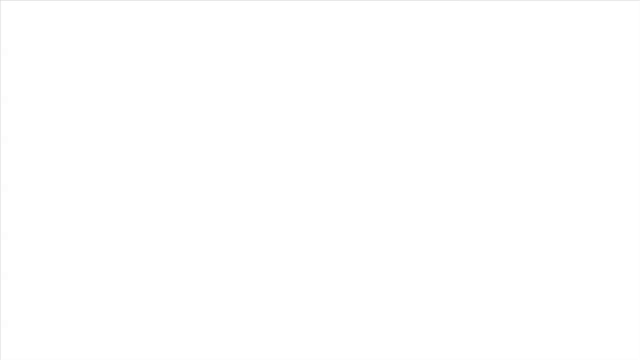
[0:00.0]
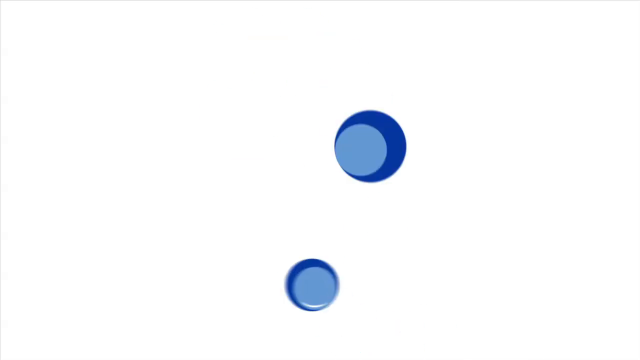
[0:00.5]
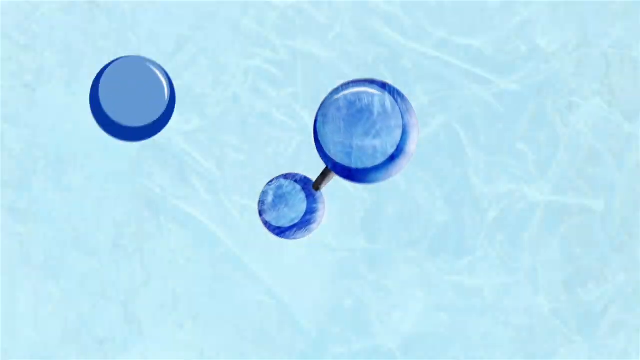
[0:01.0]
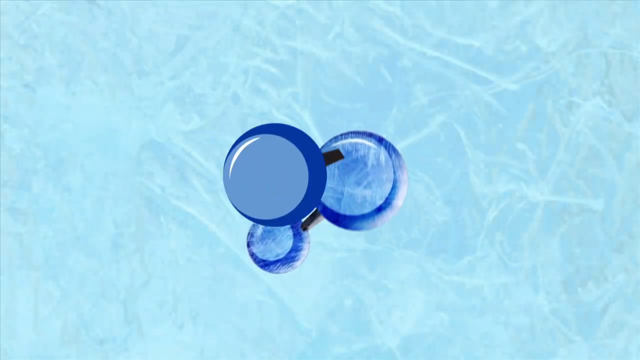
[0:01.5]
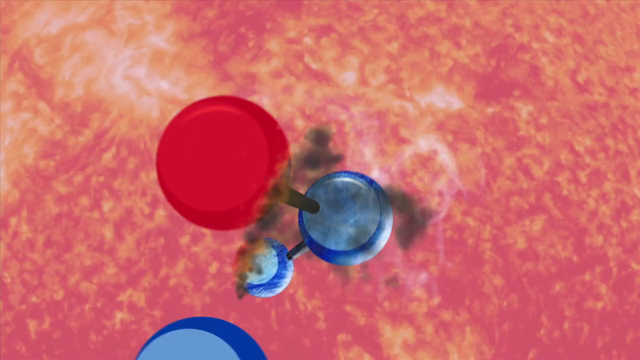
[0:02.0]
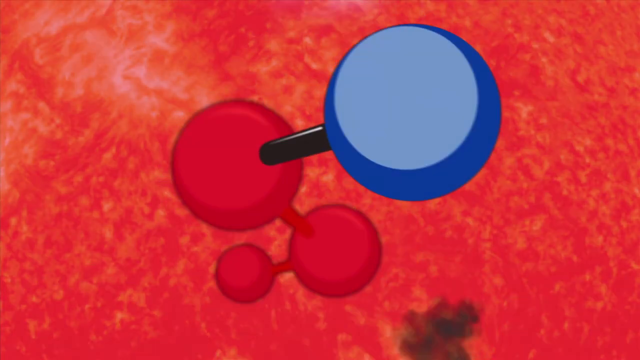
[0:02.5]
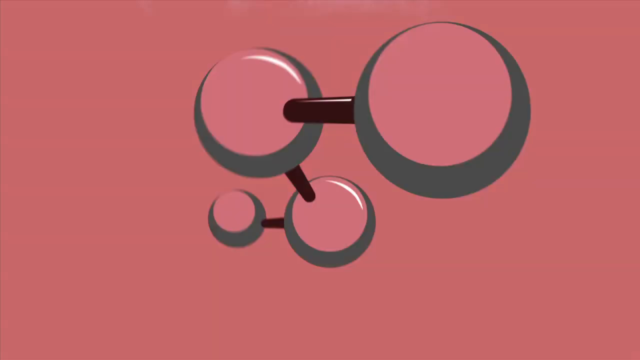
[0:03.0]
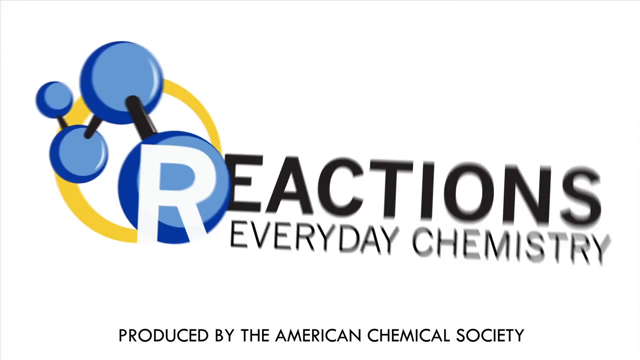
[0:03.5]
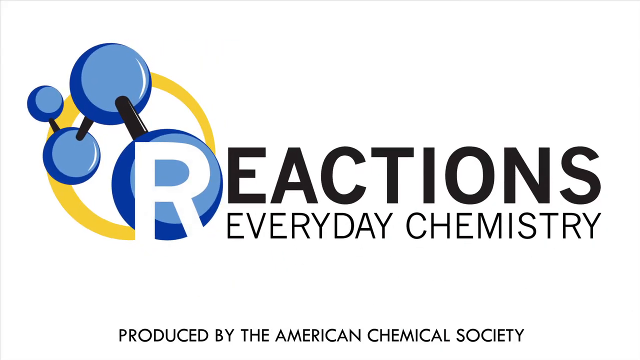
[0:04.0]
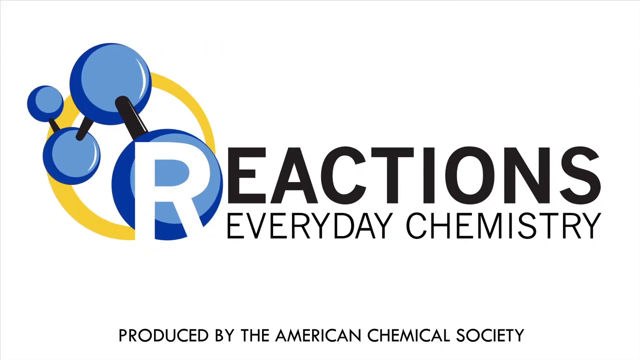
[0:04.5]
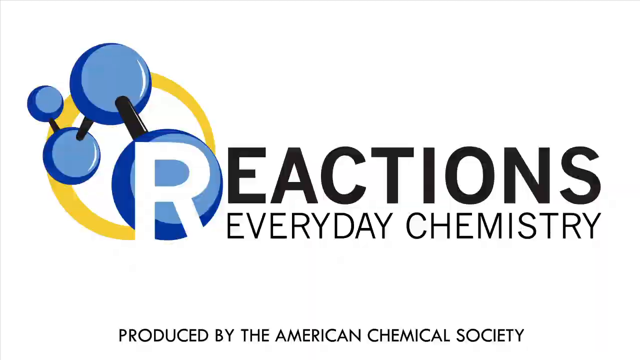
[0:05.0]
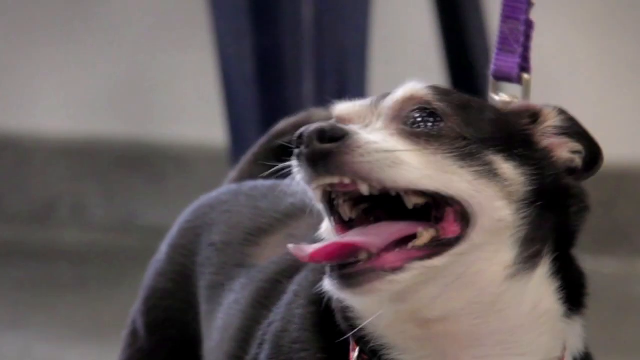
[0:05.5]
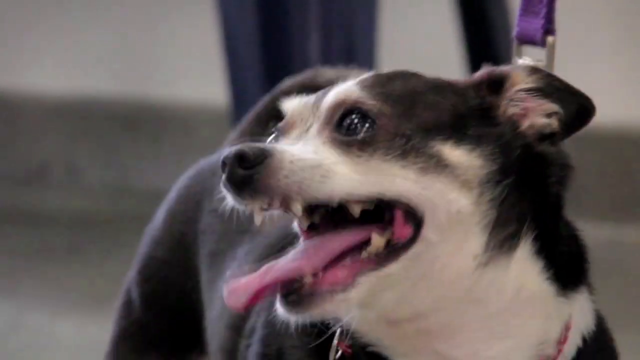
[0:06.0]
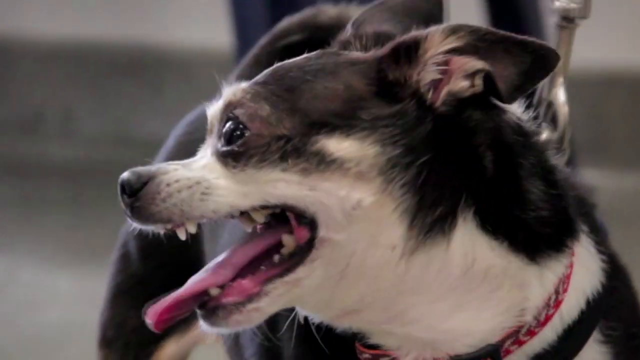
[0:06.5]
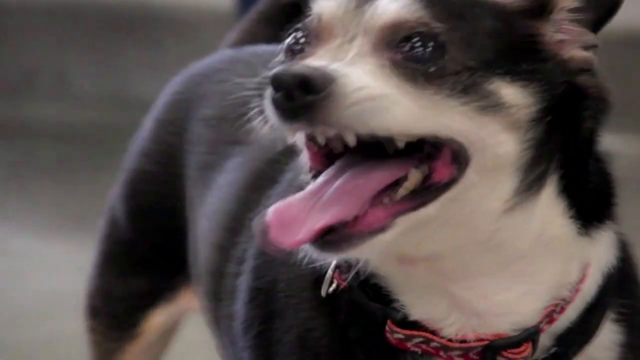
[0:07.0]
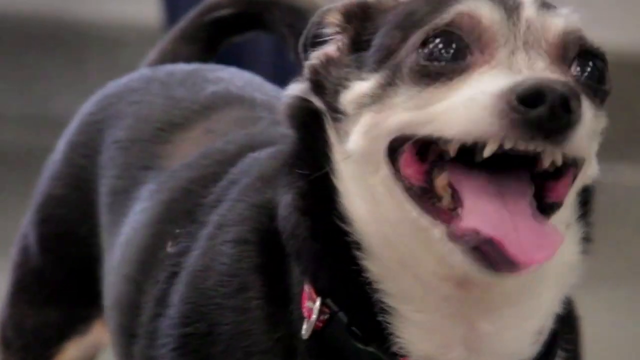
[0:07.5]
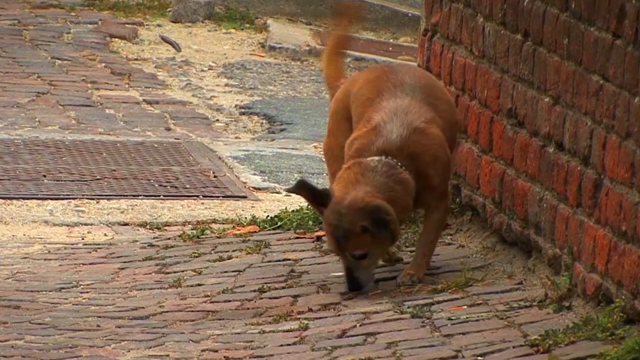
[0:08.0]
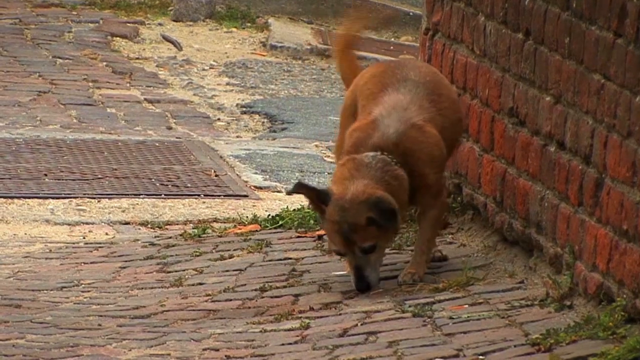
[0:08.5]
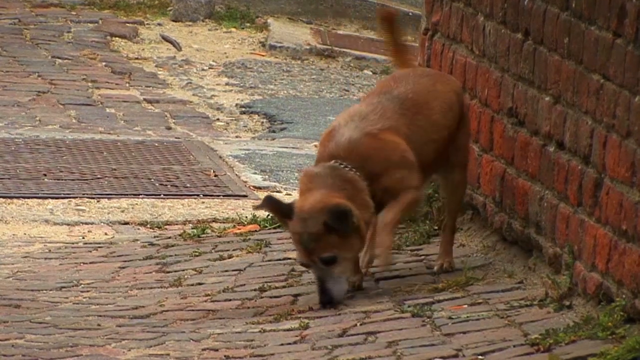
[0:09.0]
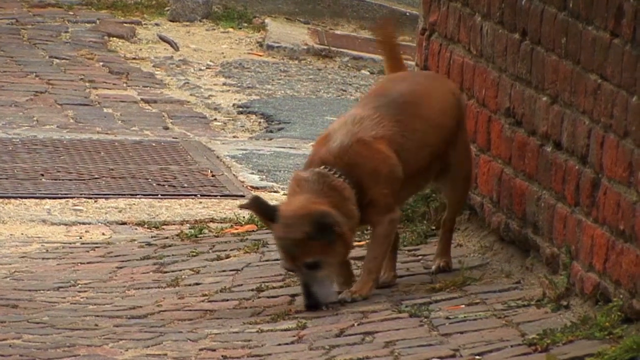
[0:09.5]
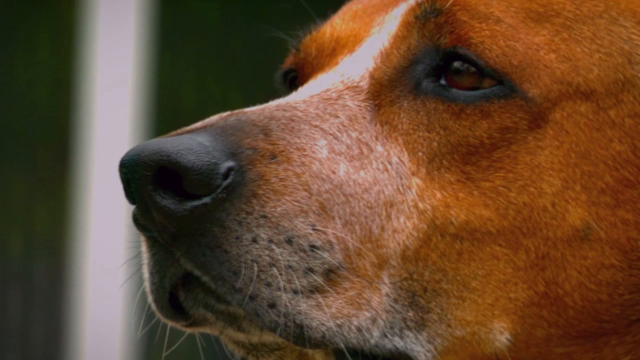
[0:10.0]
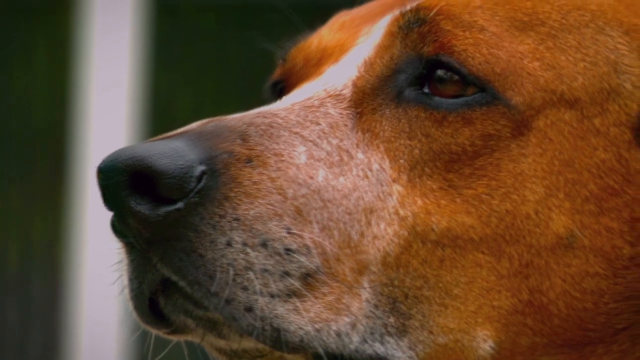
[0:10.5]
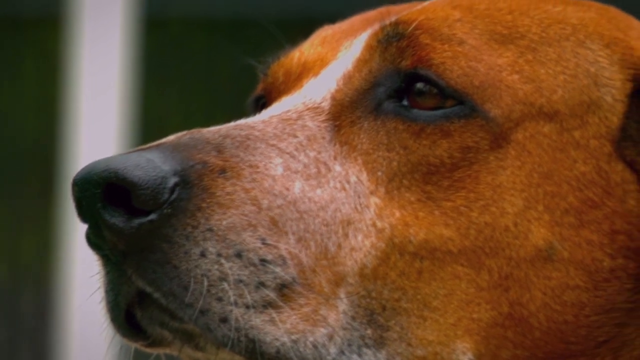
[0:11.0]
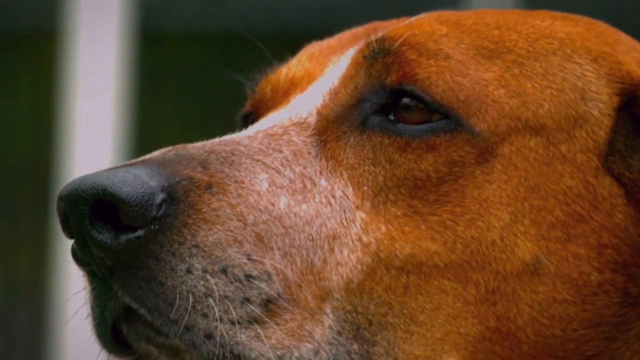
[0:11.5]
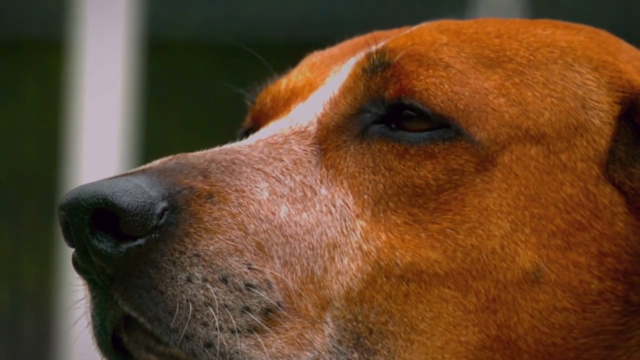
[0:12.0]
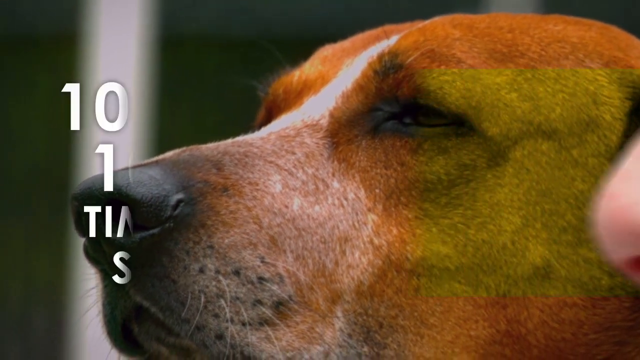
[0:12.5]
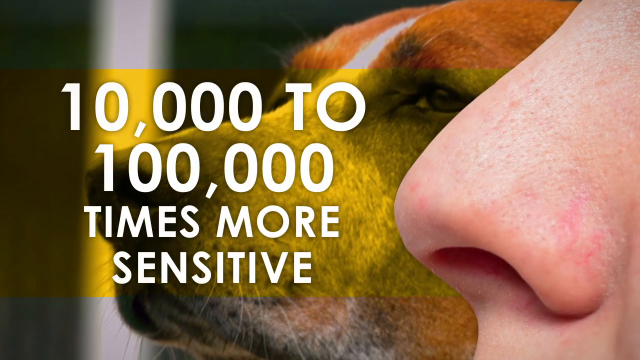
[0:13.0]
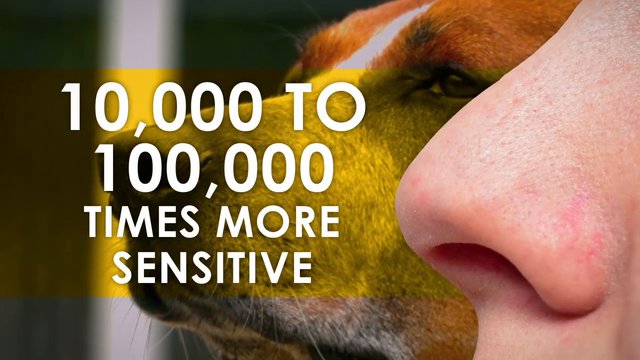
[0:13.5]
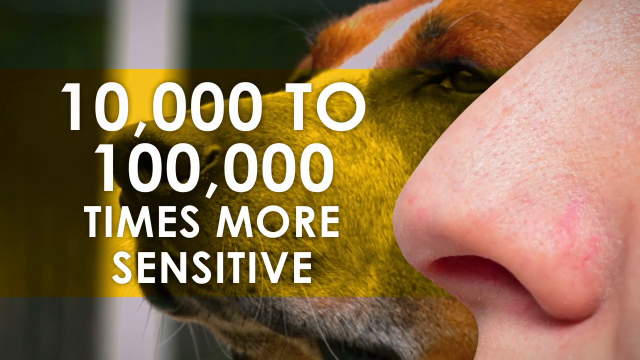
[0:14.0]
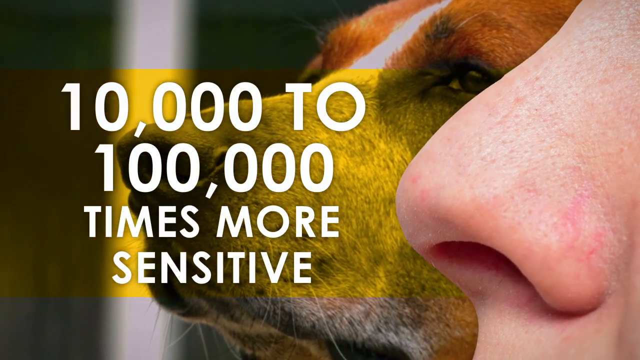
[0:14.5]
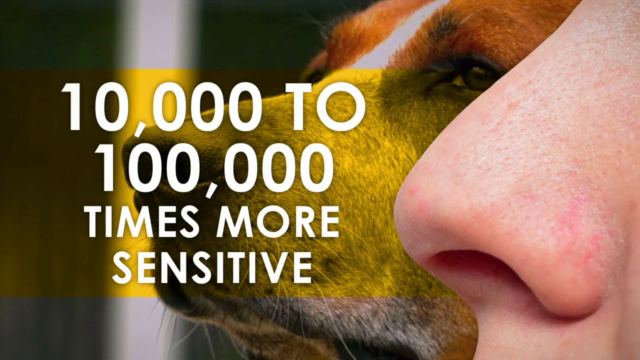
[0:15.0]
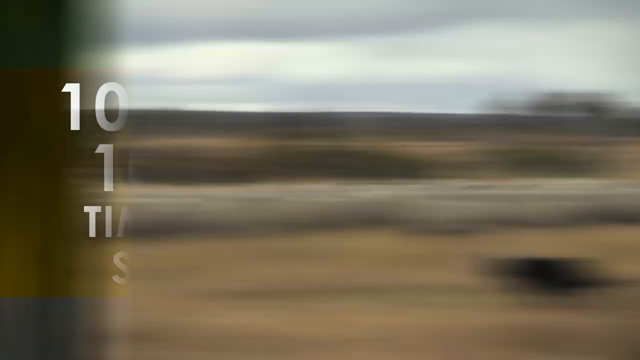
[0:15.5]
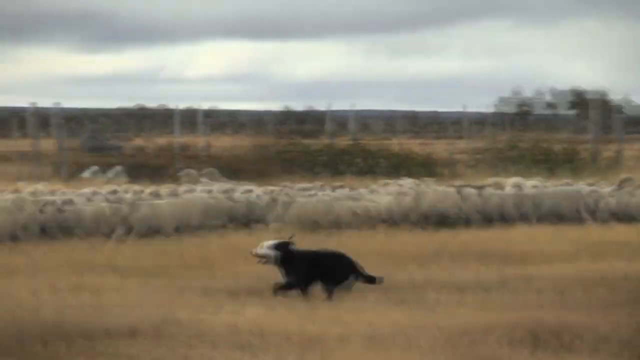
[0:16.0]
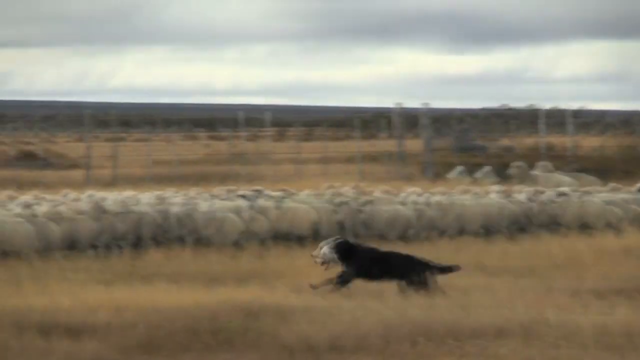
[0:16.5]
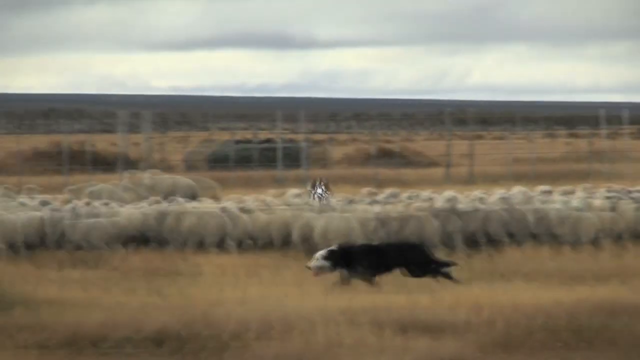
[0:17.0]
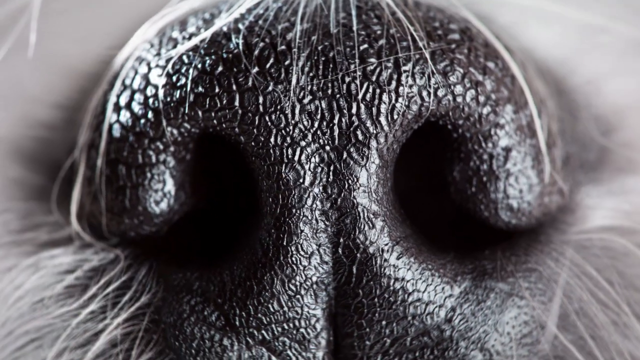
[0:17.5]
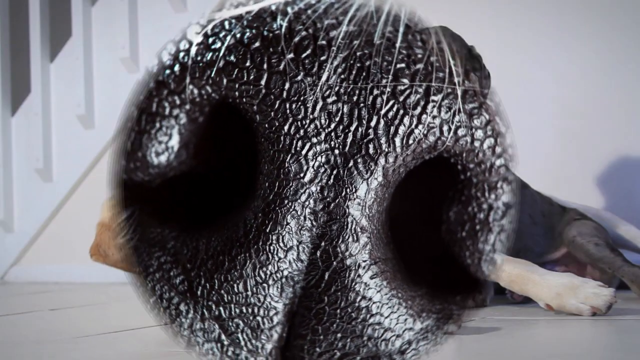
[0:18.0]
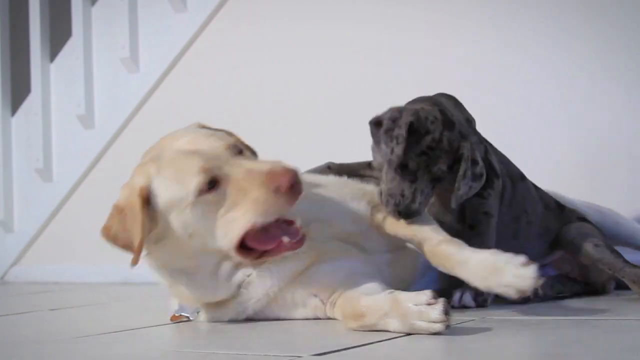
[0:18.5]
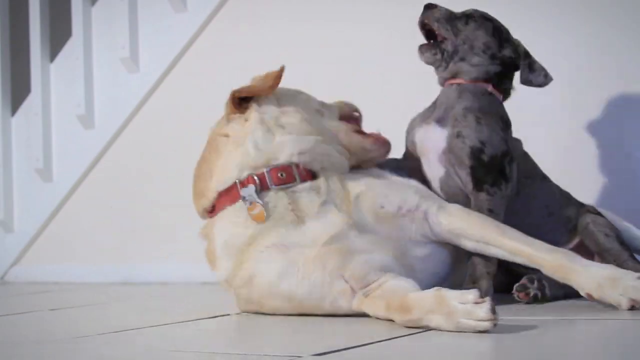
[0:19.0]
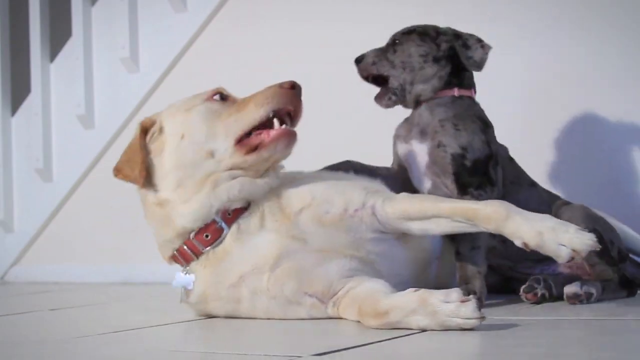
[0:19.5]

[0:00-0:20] The video, apparently a medical or science video, opens with a title on the screen reading "Reactions, Everyday Chemistry." A small dog that looks like a Chihuahua stands panting as it looks around a room. The video then moves to other dogs: one dog sniffs around in a hallway, and another sniffs around outdoors. A screen appears with the text "10,000 to 100,000 times more sensitive," with a dog on the left and a human nose on the right. The video then moves between different scenes: a dog runs in a field herding sheep, a very close-up image shows a dog's nose, and a short video shows two dogs playing in a home, with a large white dog laying on the floor and a medium-sized black dog laying on top of it.